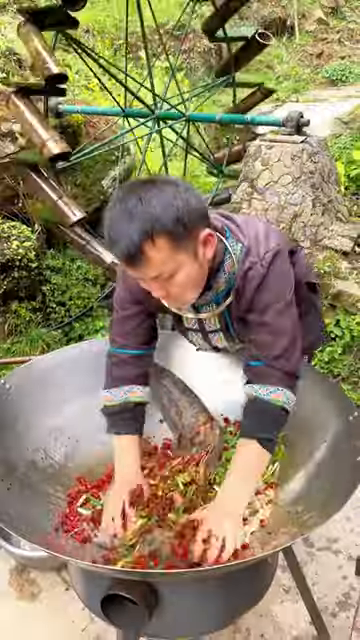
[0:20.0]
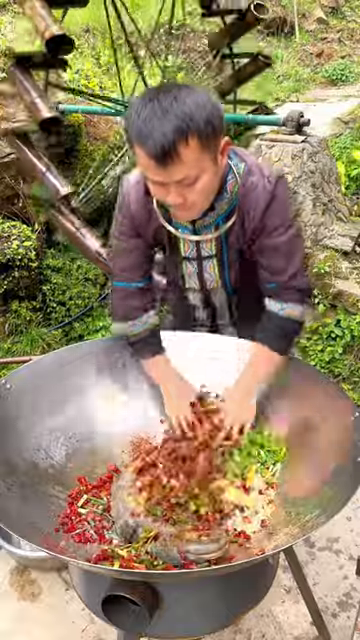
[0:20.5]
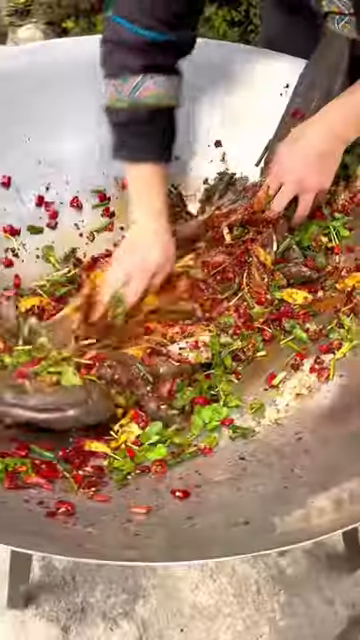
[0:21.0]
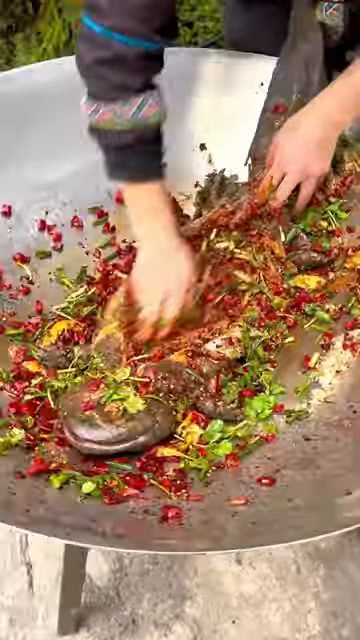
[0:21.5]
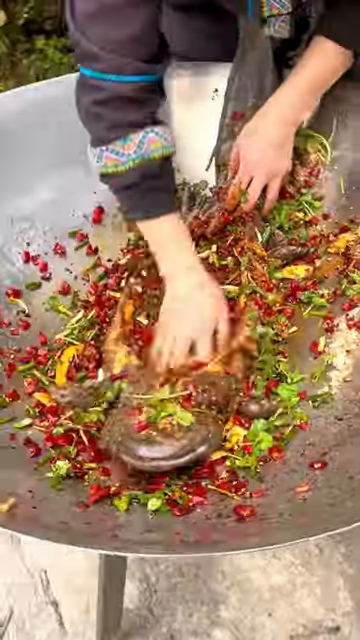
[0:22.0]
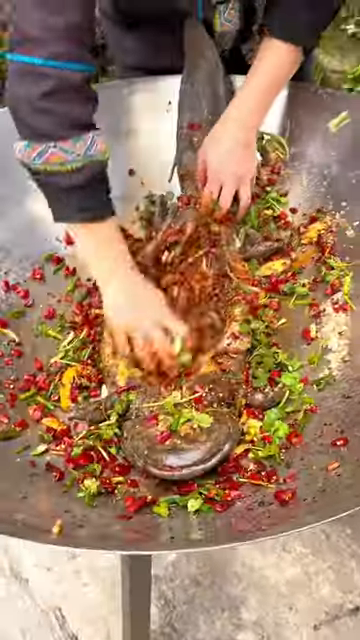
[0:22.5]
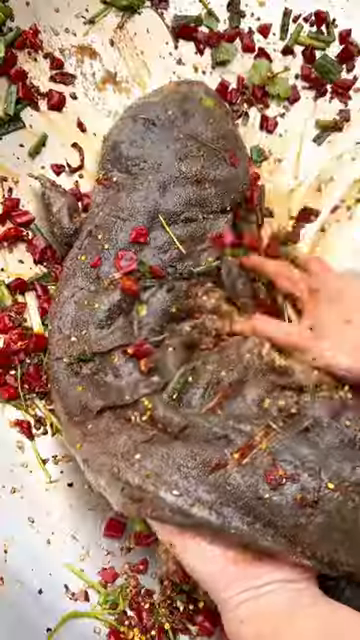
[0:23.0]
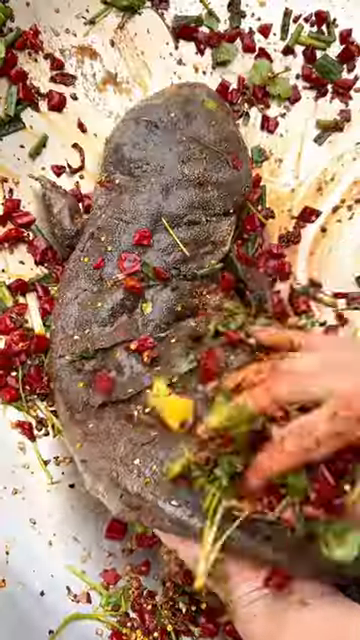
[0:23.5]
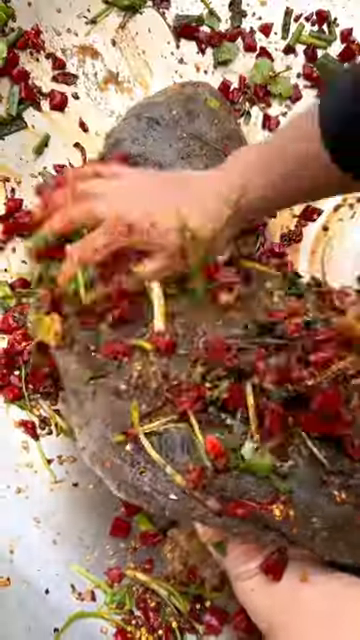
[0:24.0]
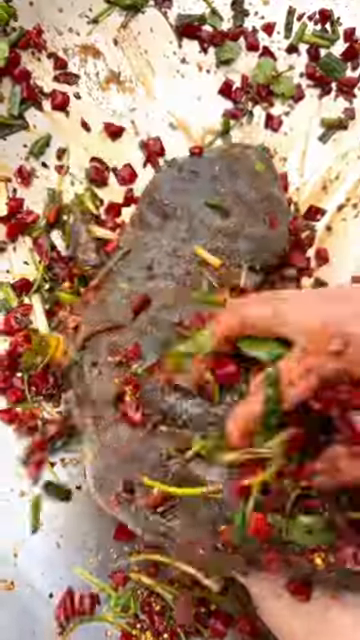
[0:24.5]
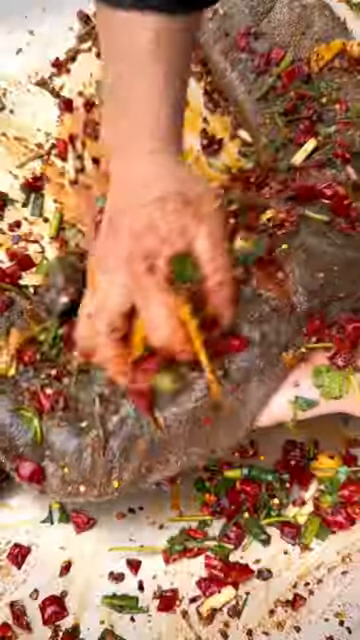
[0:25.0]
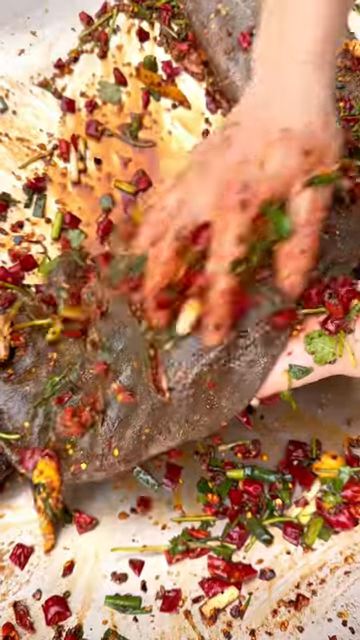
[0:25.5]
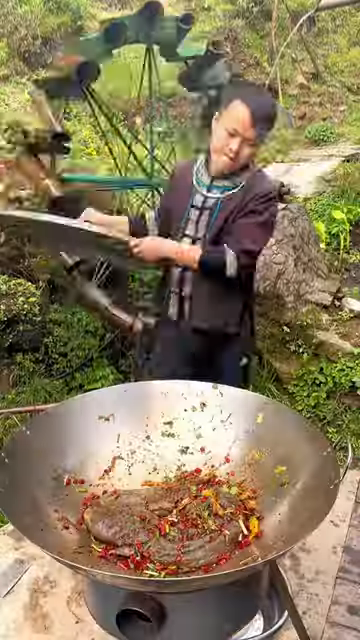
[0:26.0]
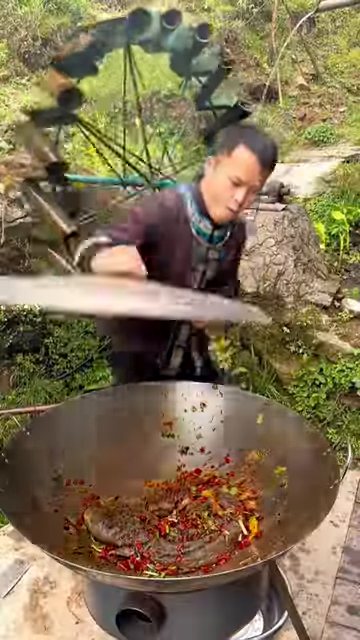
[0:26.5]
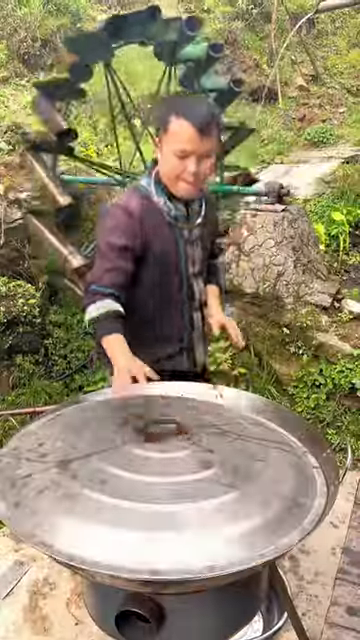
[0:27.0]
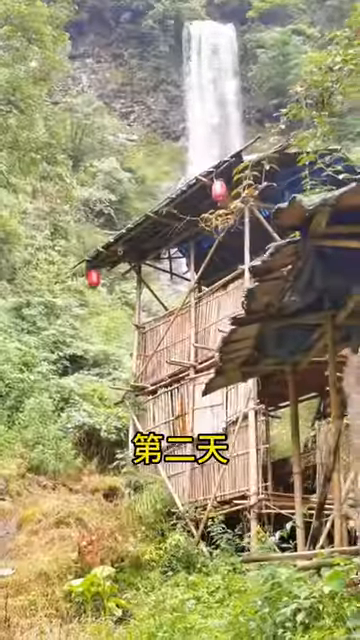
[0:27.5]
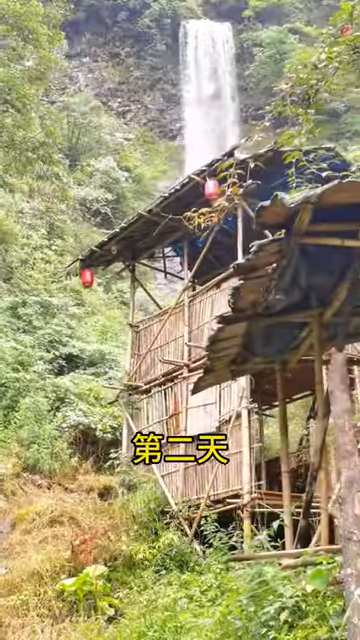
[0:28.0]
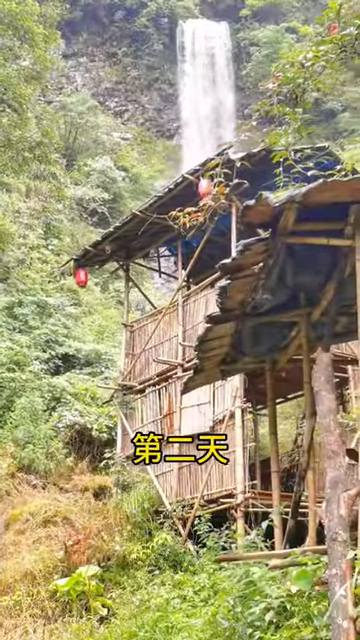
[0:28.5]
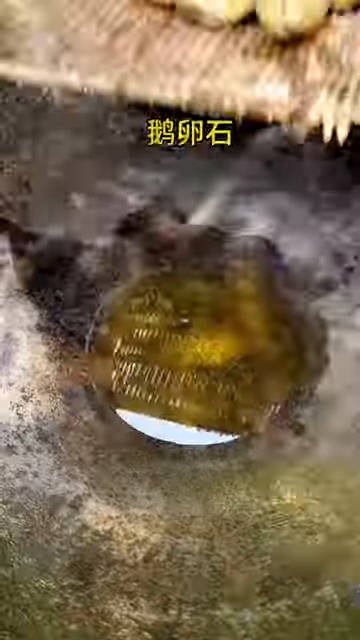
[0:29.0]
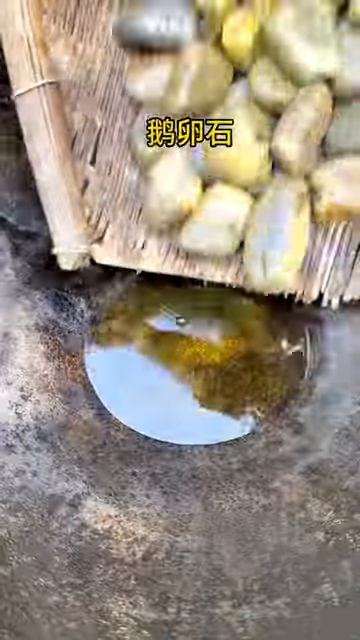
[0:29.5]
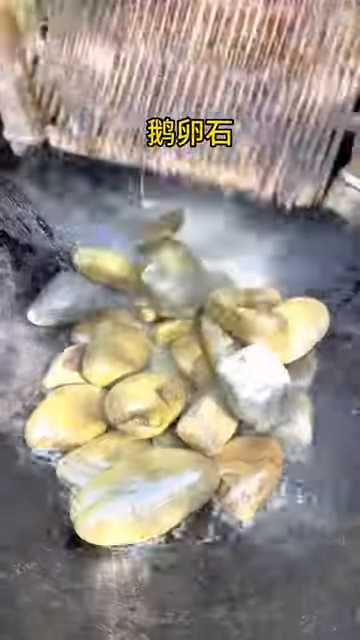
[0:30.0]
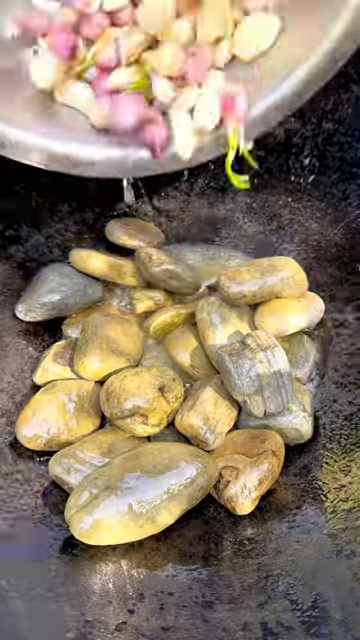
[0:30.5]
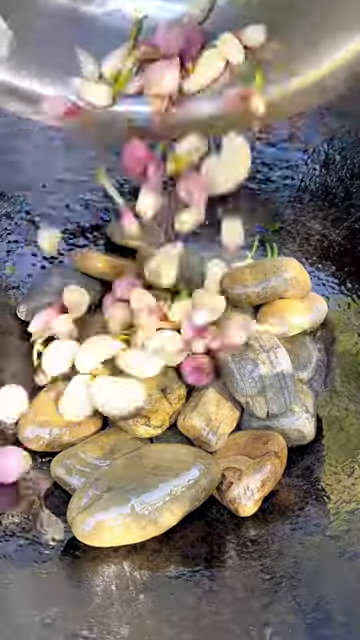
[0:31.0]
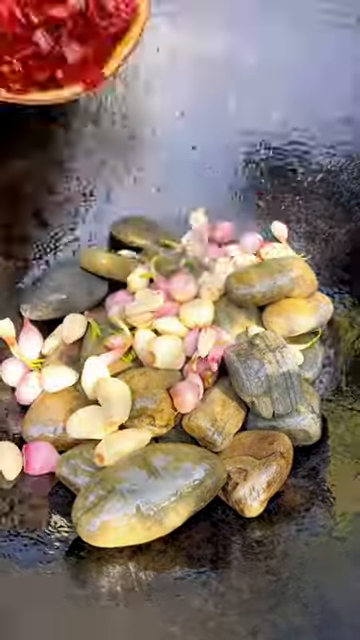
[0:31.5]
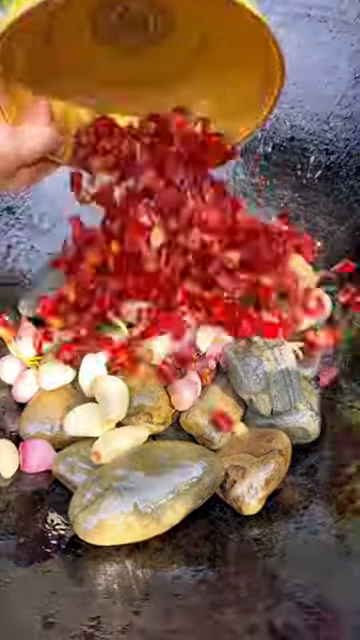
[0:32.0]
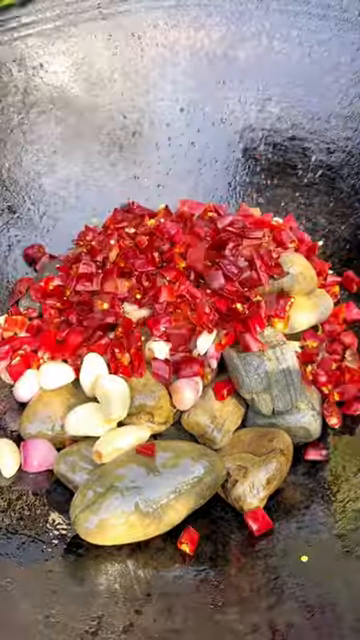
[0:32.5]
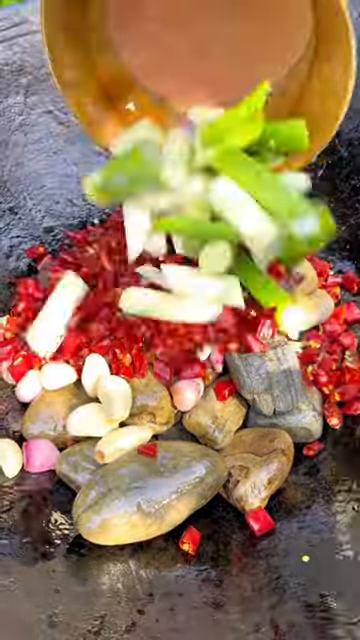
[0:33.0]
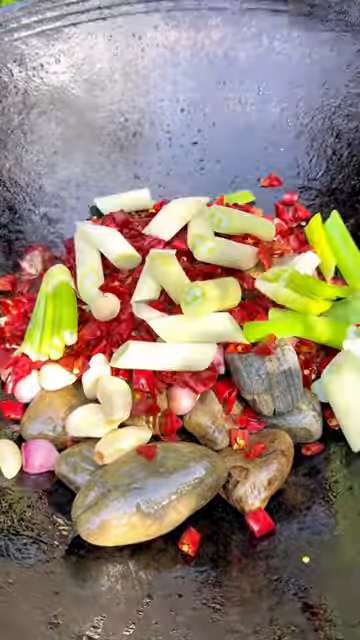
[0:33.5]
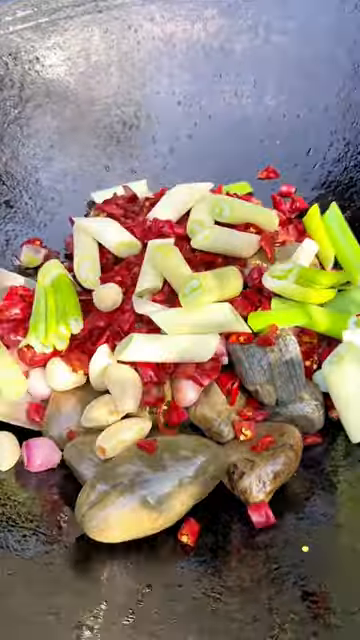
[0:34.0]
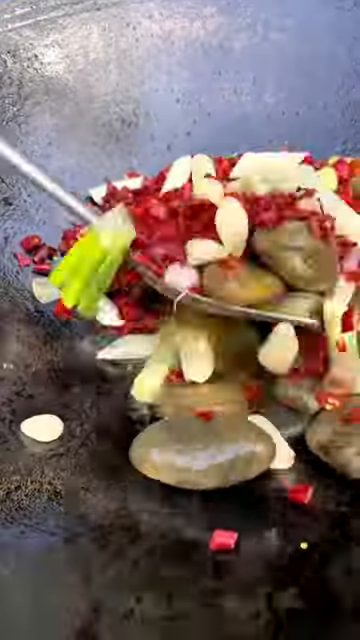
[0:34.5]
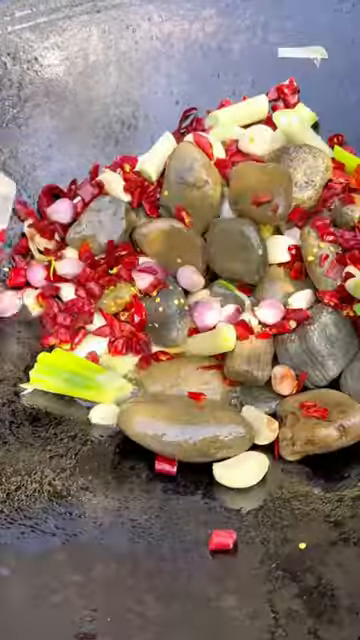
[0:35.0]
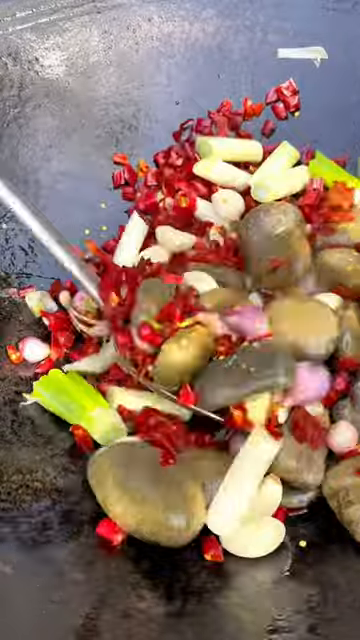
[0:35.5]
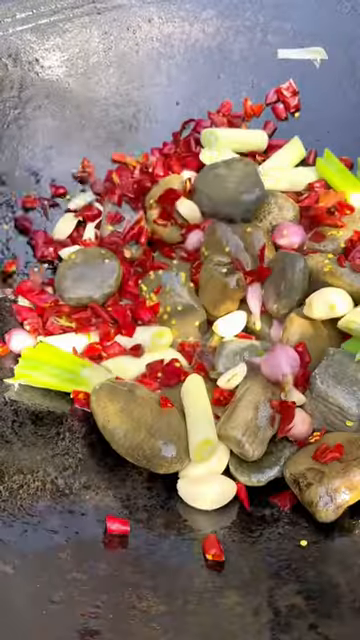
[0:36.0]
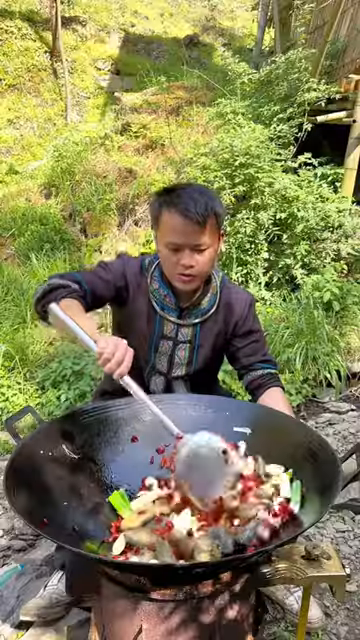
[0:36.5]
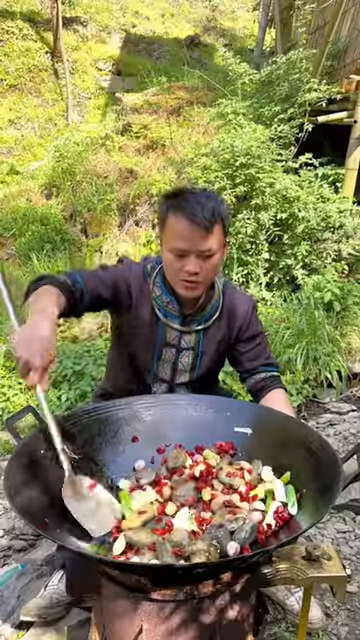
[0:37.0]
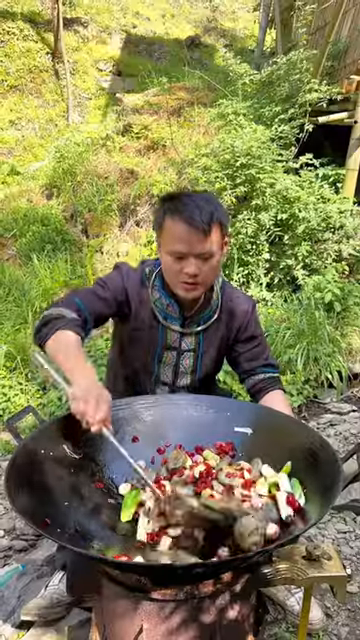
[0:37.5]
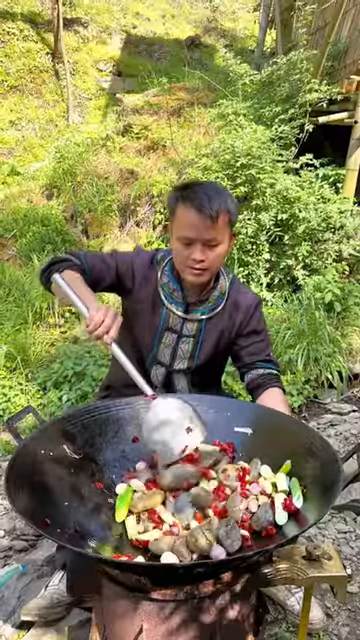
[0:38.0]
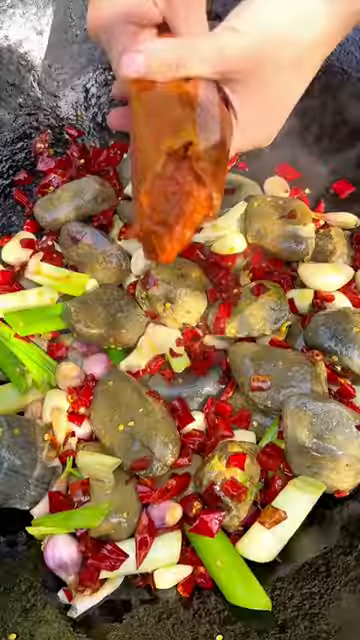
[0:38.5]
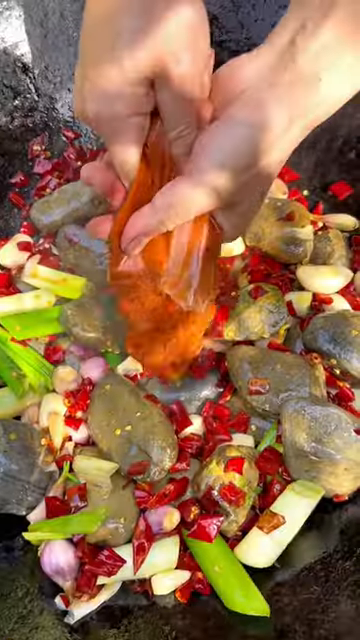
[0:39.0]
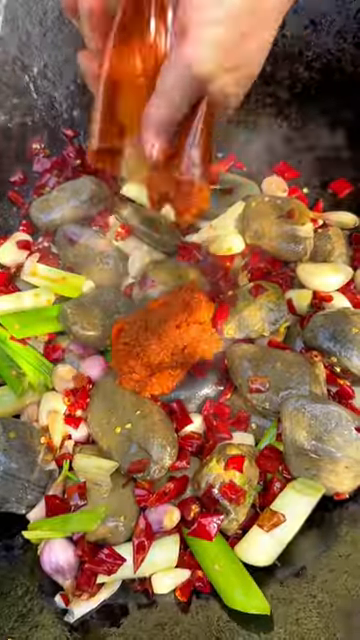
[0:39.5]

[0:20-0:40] A man who looks Chinese massages a large salamander in a wok with lots of different chopped vegetables. He then stuffs the inside of the salamander with a mixture of chopped vegetables, oil and sauces. Next, a large wok placed outside is shown, with what looks like a pile of stones thrown into it. Shallots, chili peppers and leeks are chopped up, and he uses a large spatula, cooking outdoors over a fire. Finally he adds an orange-colored paste to the mixture. The man wears a purple Chinese-style jacket with an ethnic pattern band around the sleeves, around the collar and down the shirt front. He has short black hair, and behind him is a water wheel made of bamboo segments. He also wears a circular necklace that looks like a ring around his neck.